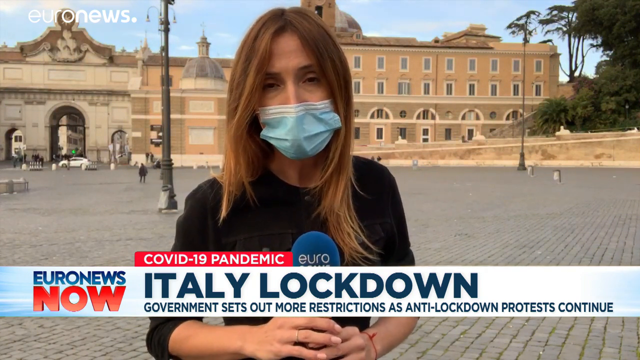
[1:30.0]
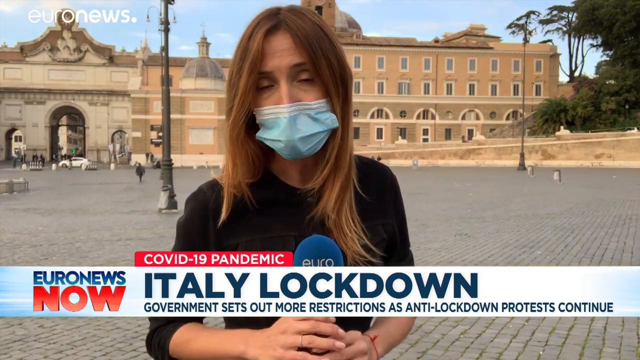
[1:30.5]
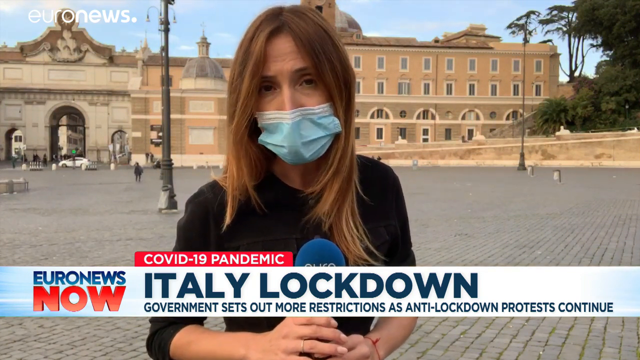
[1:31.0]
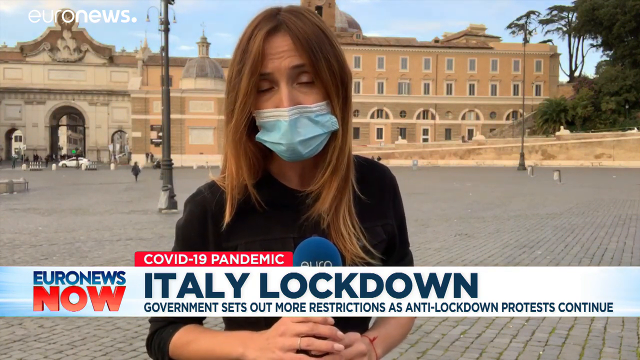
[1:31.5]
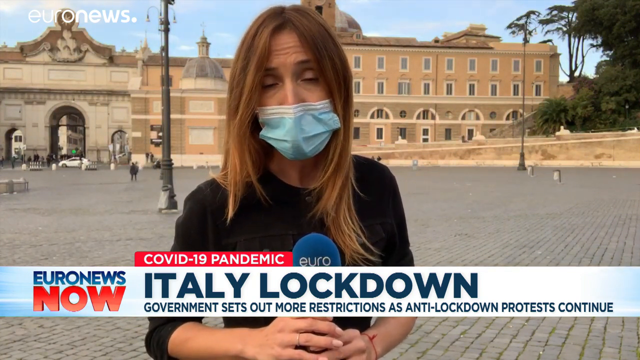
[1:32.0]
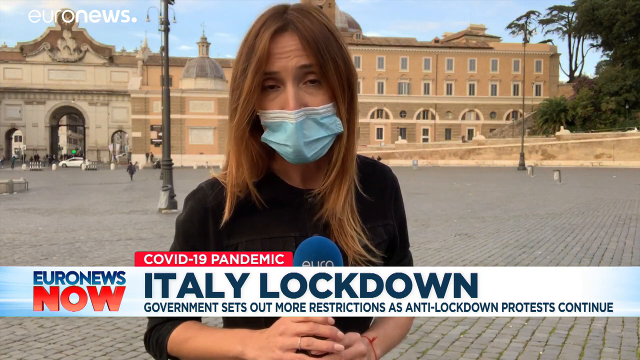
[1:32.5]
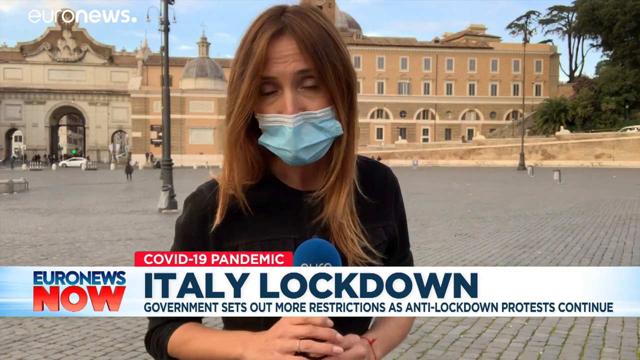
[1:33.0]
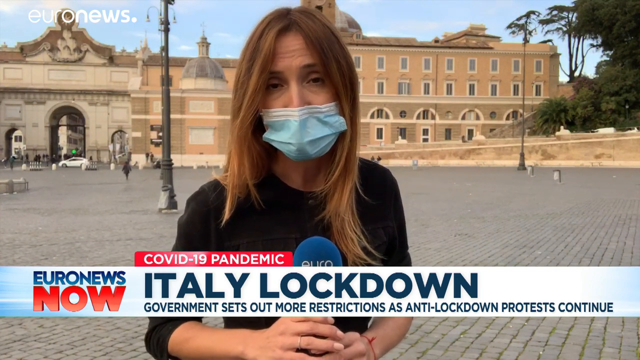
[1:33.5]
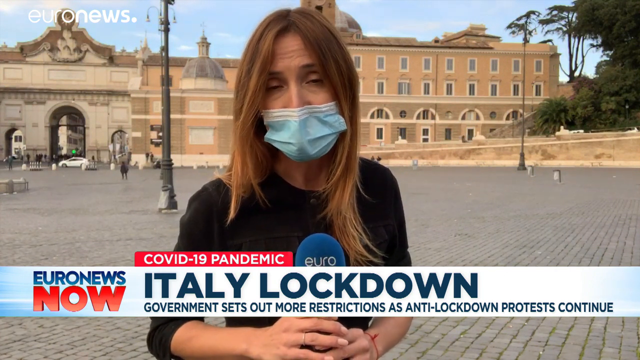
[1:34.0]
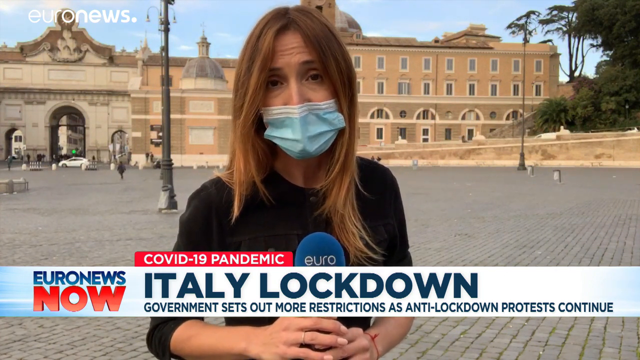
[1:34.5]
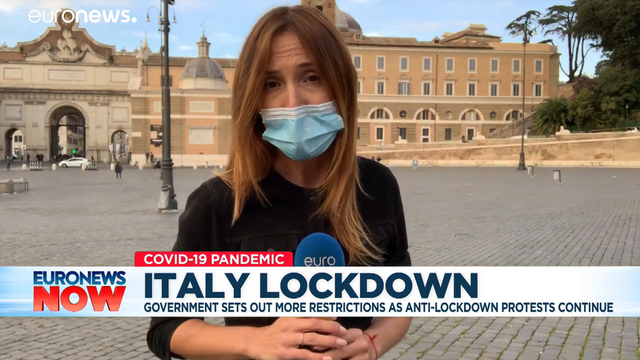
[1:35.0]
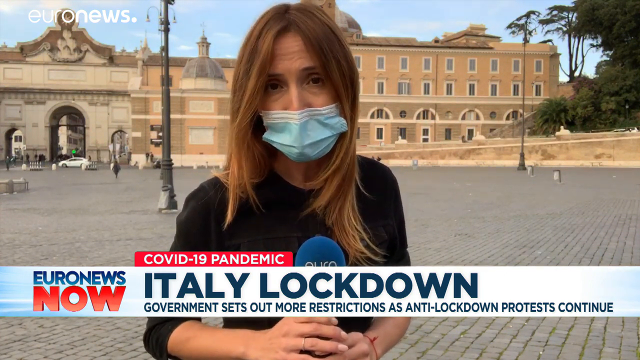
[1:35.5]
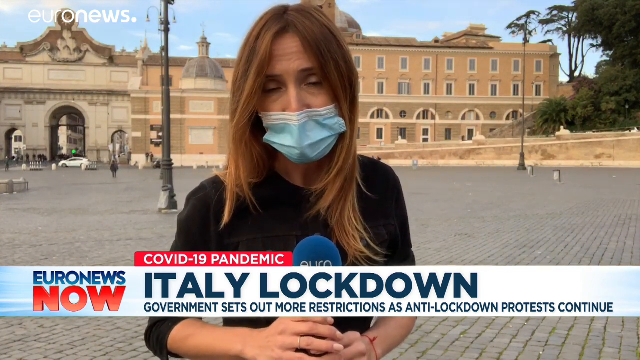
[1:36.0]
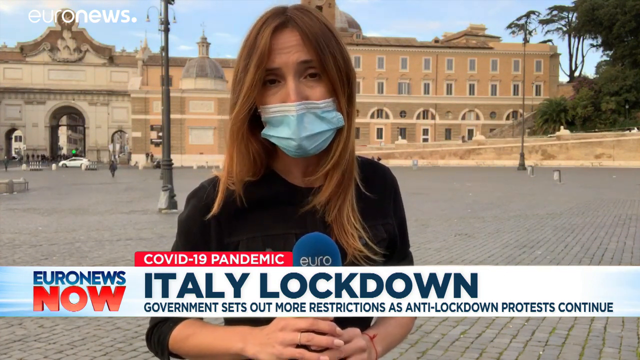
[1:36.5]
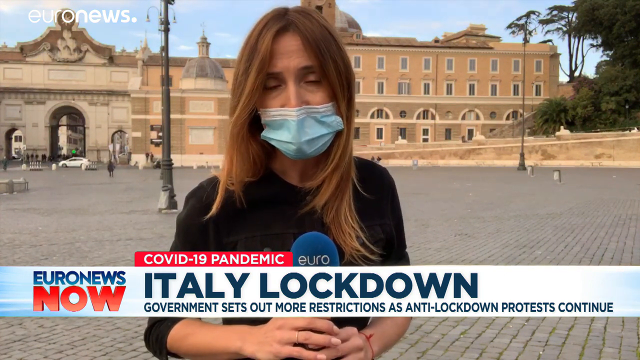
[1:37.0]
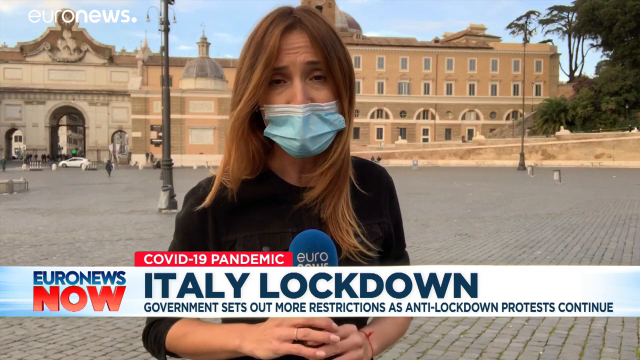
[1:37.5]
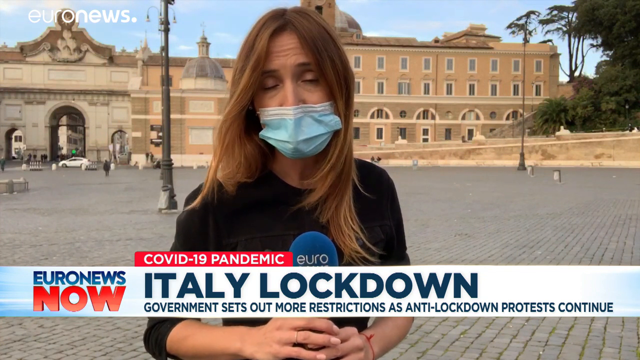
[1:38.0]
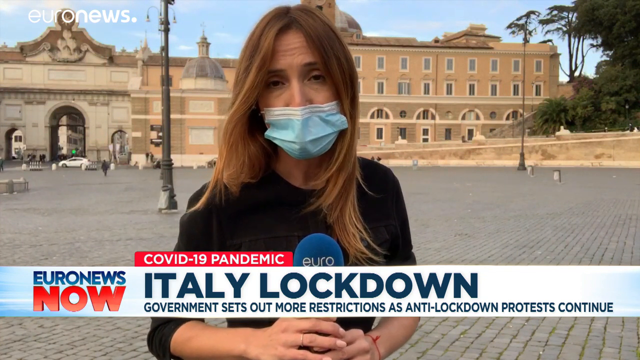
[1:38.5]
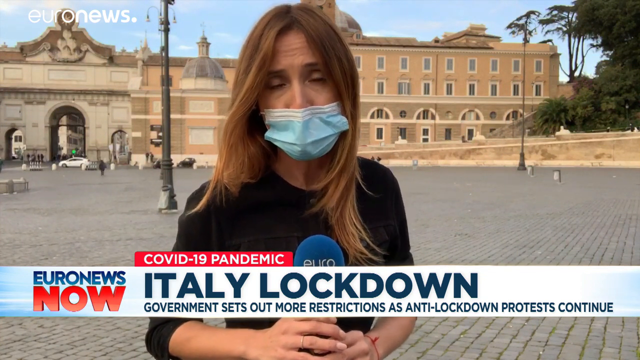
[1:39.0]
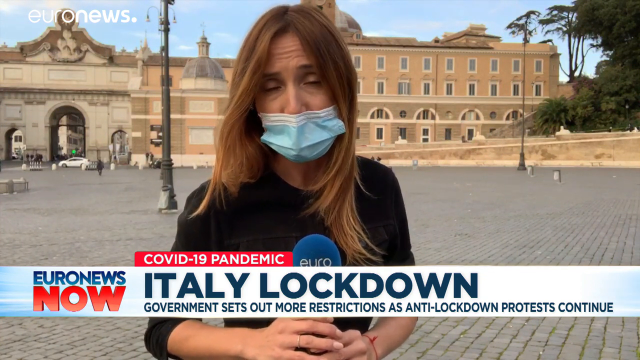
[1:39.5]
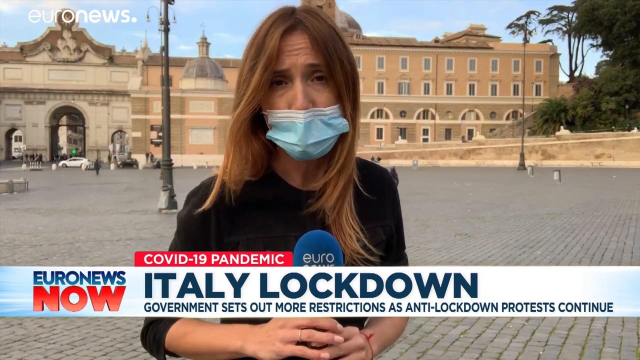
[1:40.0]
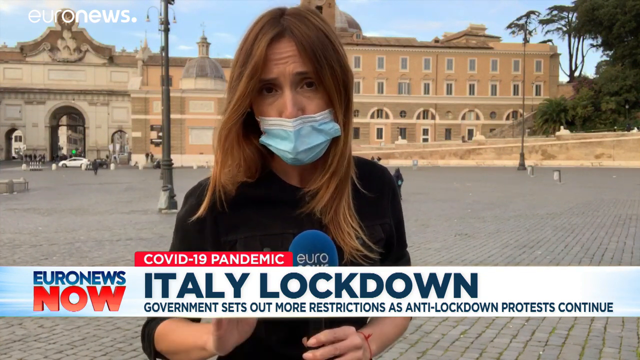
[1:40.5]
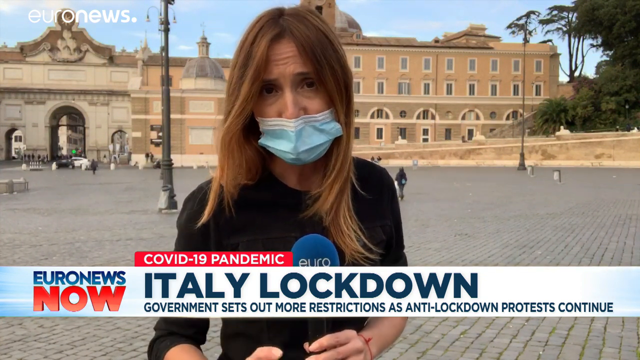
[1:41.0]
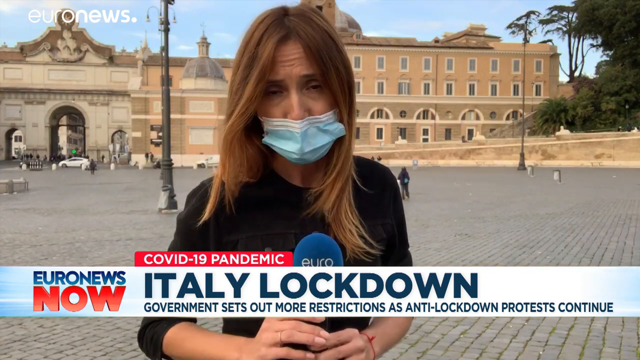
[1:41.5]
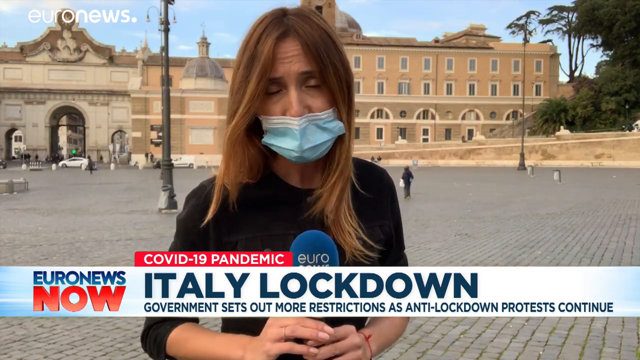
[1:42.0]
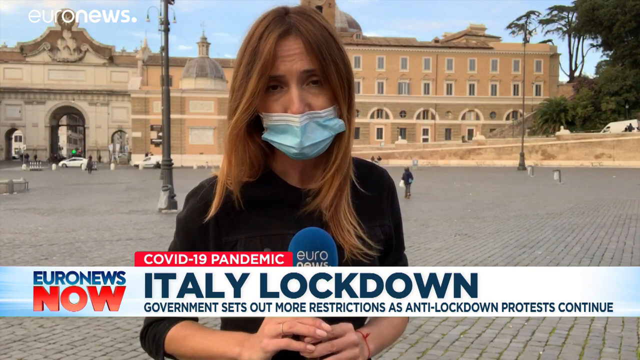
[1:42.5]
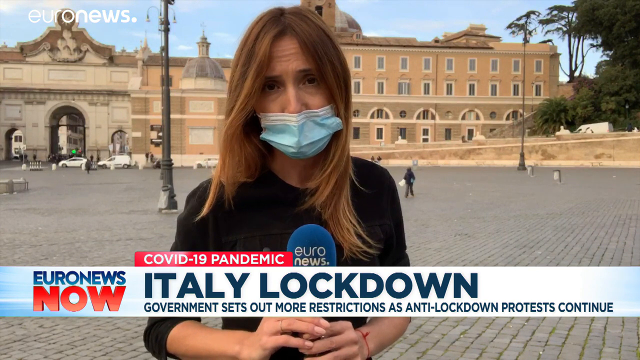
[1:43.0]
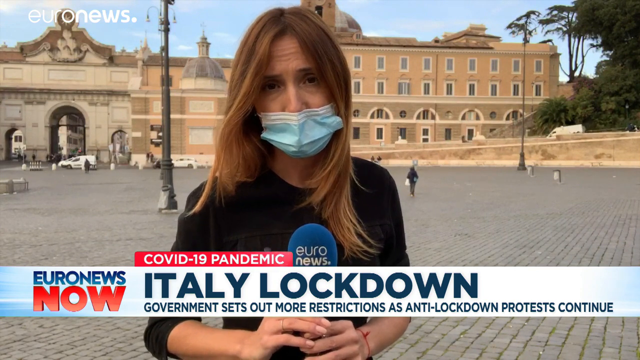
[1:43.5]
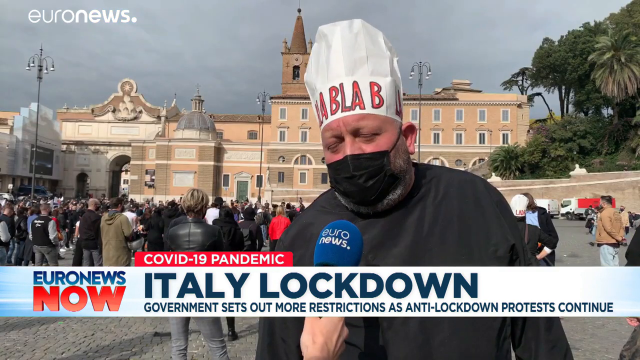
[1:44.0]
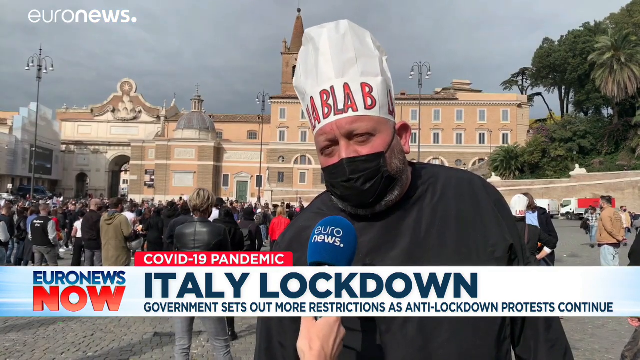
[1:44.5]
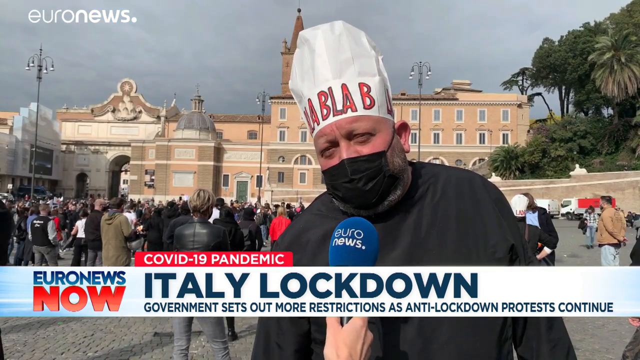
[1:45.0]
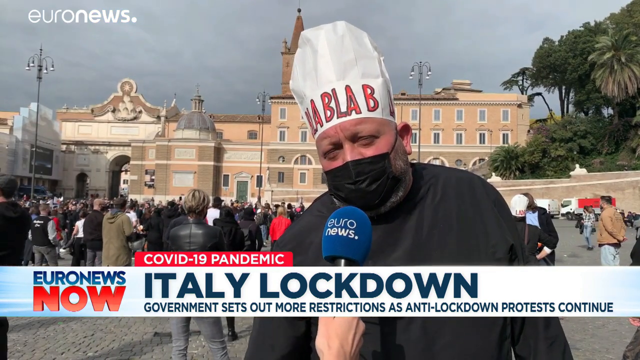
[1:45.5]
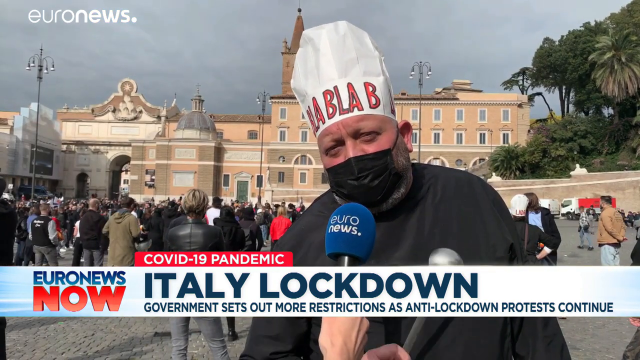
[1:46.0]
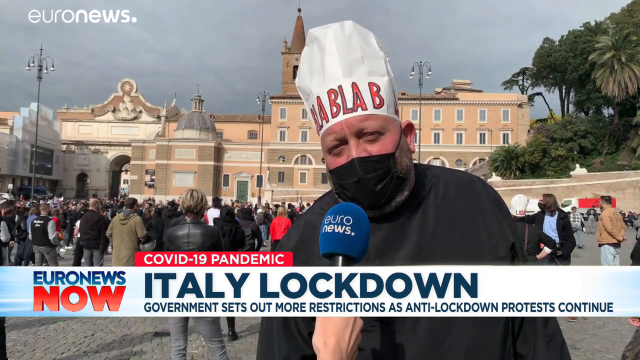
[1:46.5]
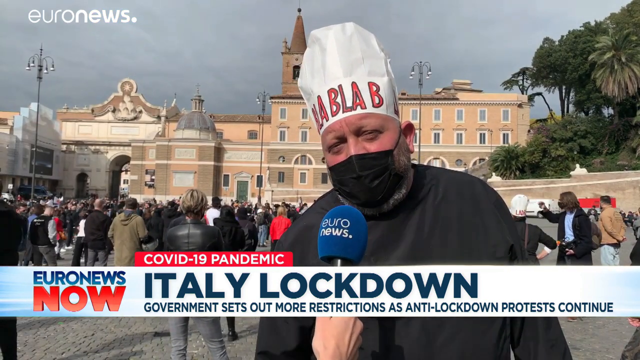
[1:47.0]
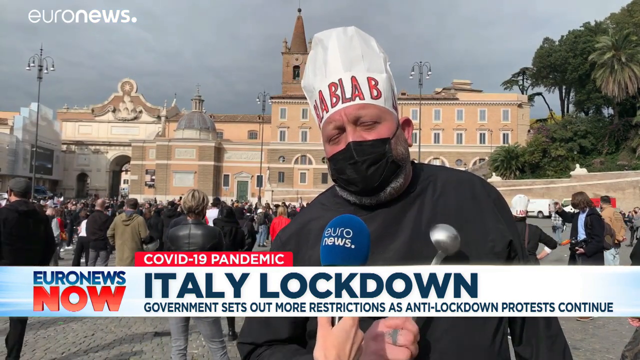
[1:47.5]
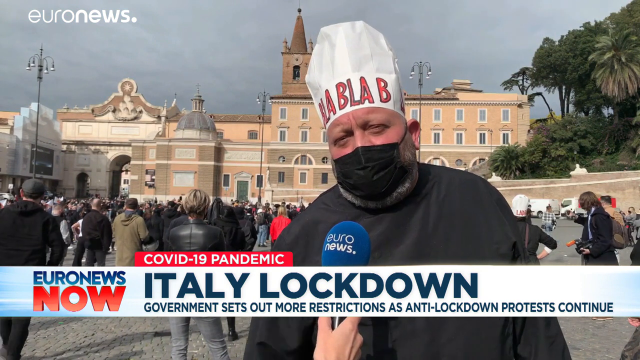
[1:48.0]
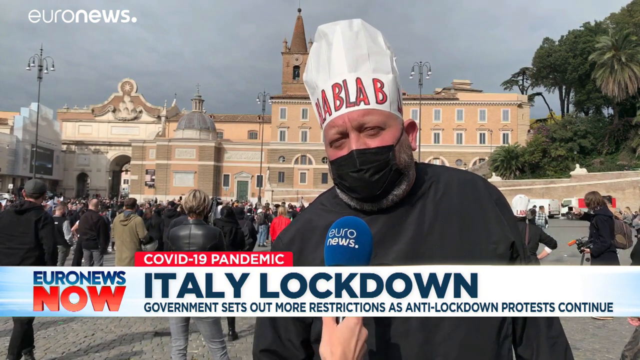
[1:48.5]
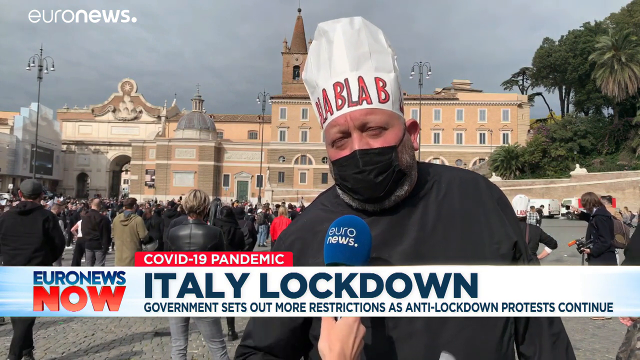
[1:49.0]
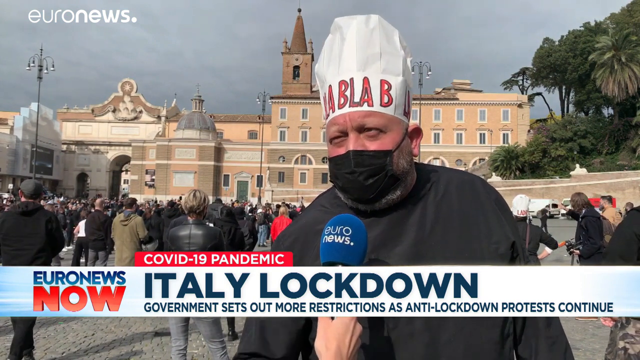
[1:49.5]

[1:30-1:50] A woman with blonde, brownish hair extending past her shoulders wears a blue and white COVID mask and a very long black dress shirt. She holds a blue microphone that says "Euronews" in white text, and the same Euronews logo appears in white in the upper left corner. At the bottom is a long blue and white banner: on the left, blue and orange text says "Euronews now", and in the center bolded blue text says "Italy lockdown. Government sets out more restrictions as anti-lockdown protests continue." Above it is an orange banner with white text that says "COVID-19 pandemic". Behind her, it looks like Rome, with a light post on her left and another in the far distance on her right, and quite a lot of trees in the upper right corner. She looks at the camera as she speaks into her microphone, while cars drive by and people walk around in the background. The scene then transitions to a man in a white chef hat with orange and black lettering that says "BLAB". He wears a black mask and a black outfit, with a bunch of other people in the background, and talks into the microphone.